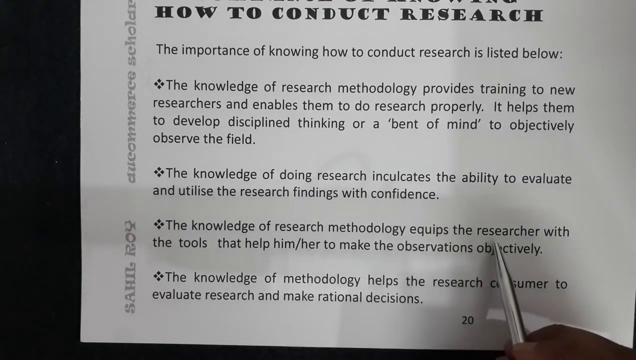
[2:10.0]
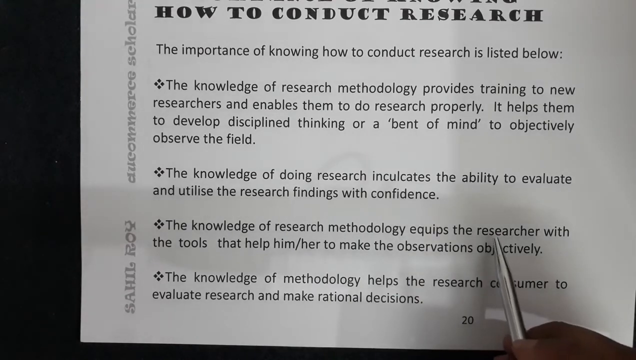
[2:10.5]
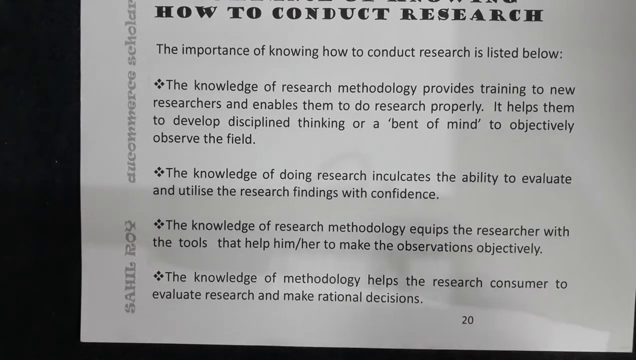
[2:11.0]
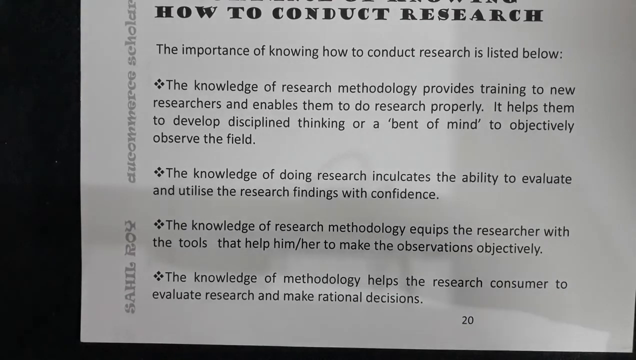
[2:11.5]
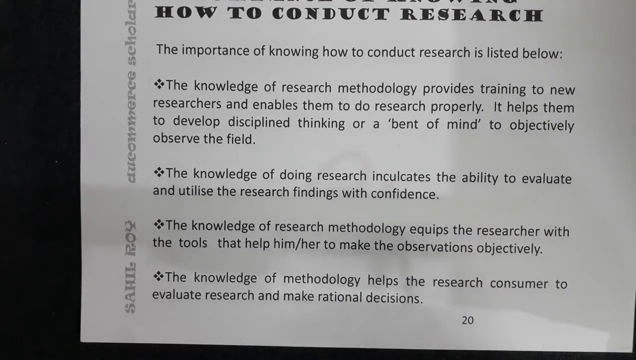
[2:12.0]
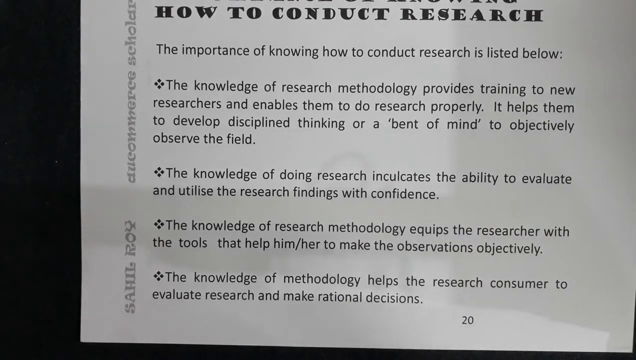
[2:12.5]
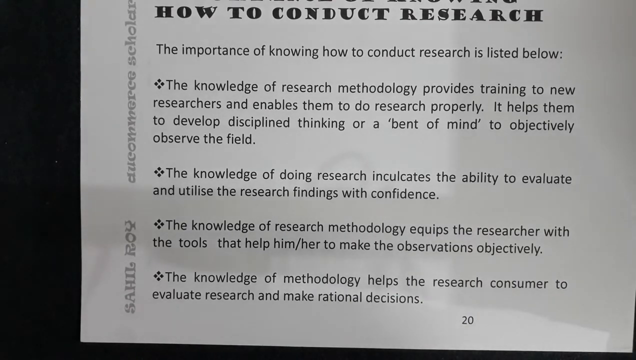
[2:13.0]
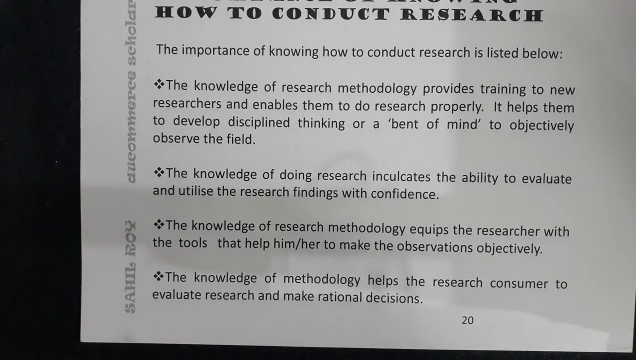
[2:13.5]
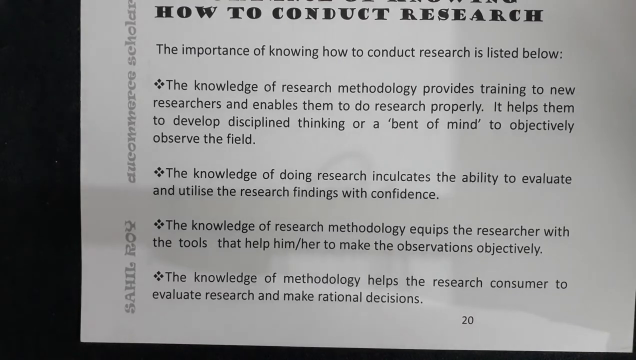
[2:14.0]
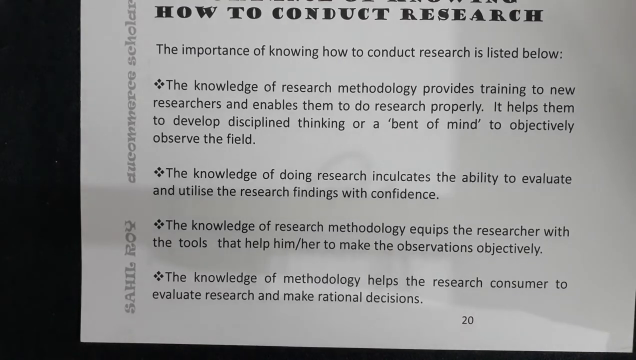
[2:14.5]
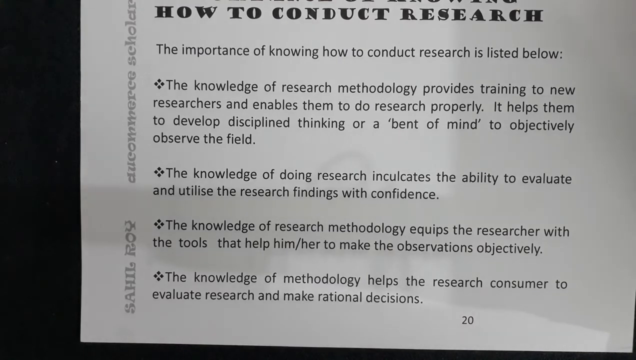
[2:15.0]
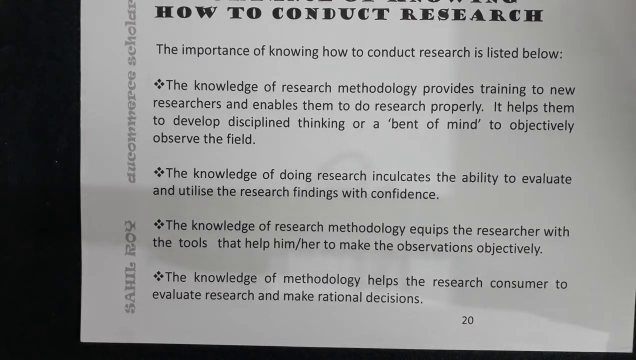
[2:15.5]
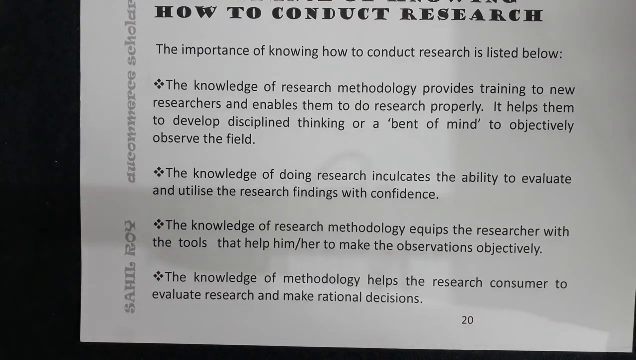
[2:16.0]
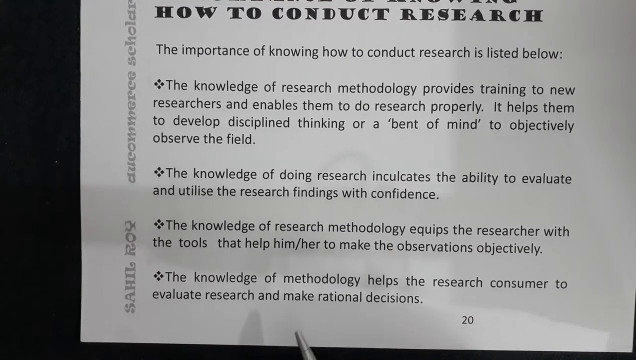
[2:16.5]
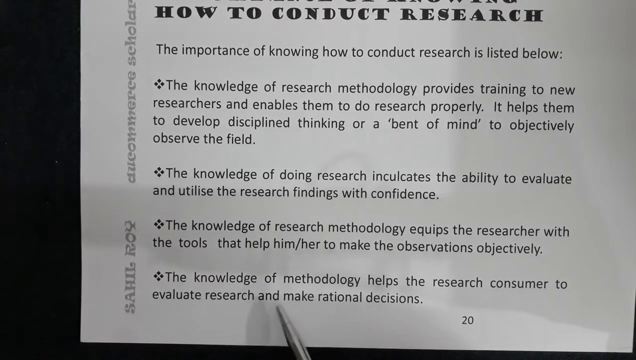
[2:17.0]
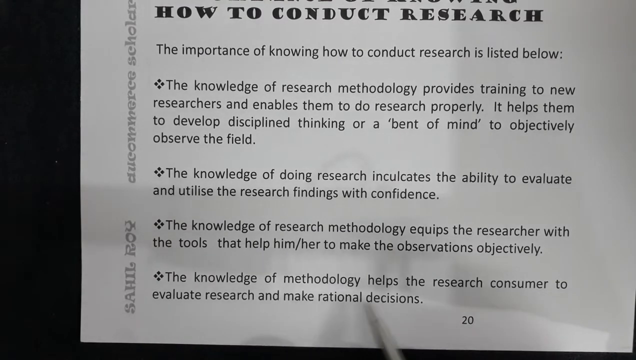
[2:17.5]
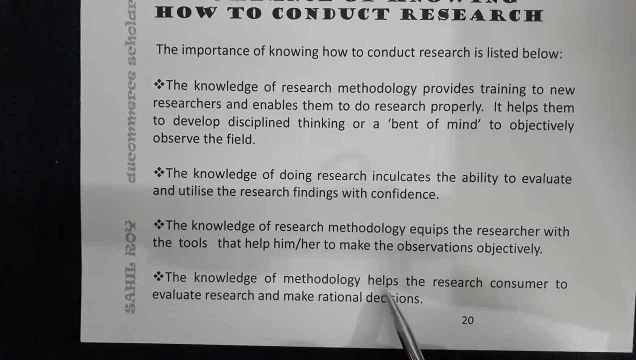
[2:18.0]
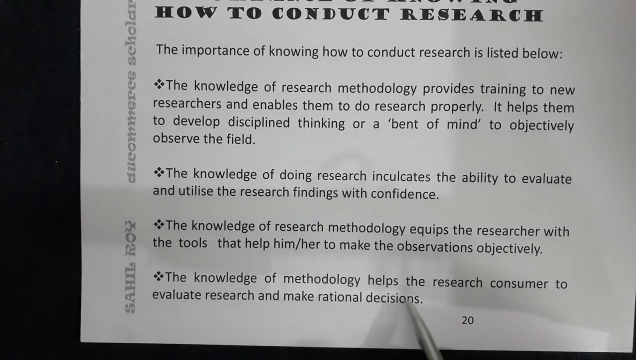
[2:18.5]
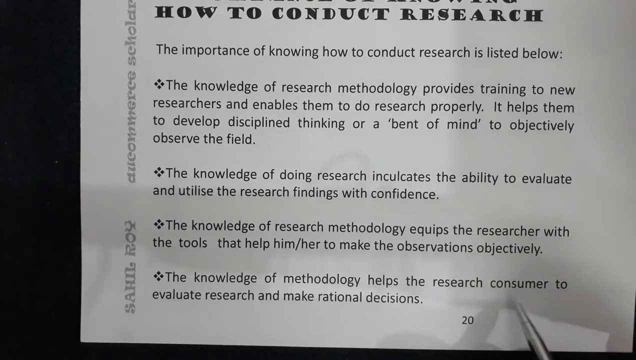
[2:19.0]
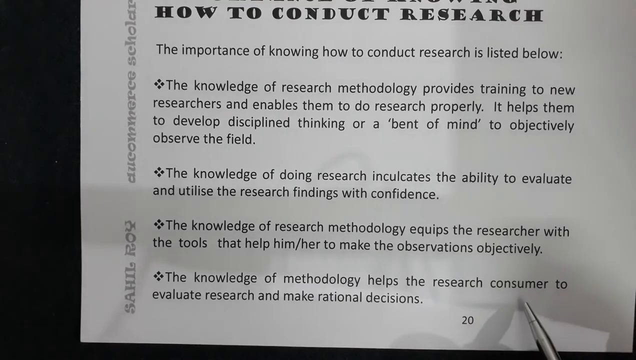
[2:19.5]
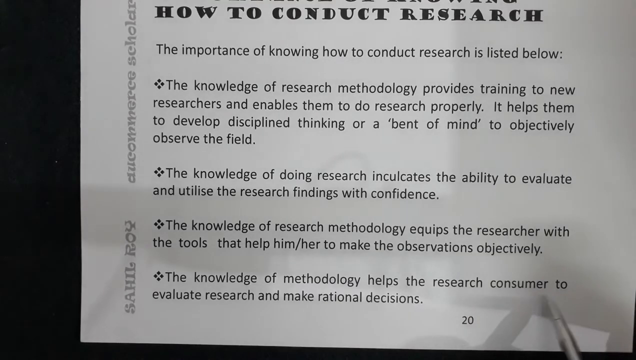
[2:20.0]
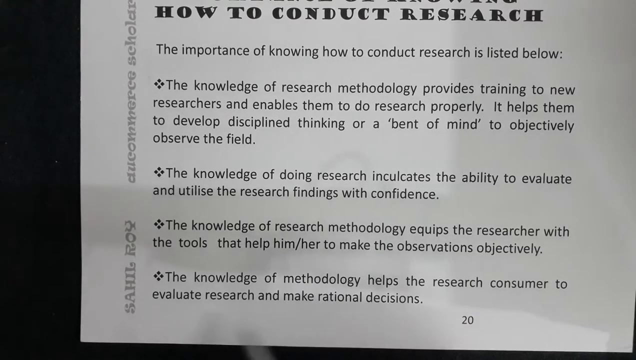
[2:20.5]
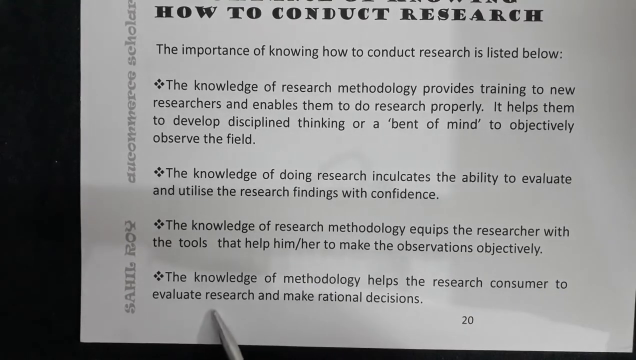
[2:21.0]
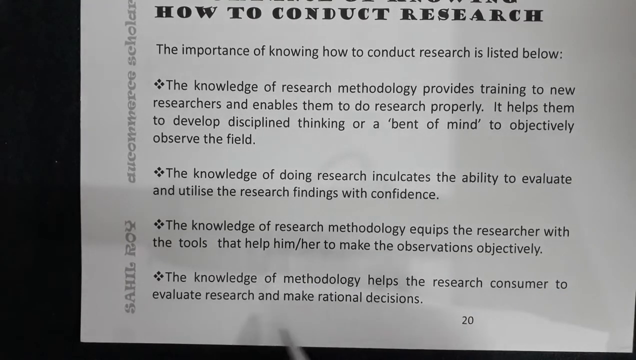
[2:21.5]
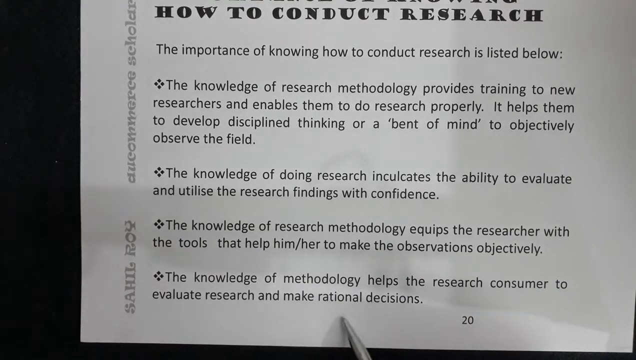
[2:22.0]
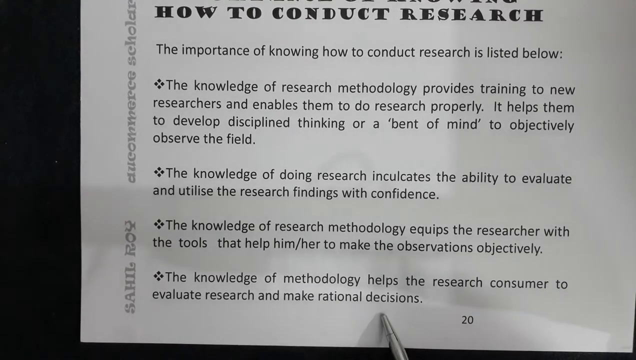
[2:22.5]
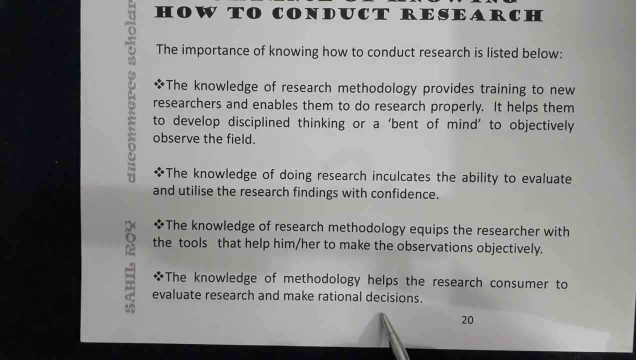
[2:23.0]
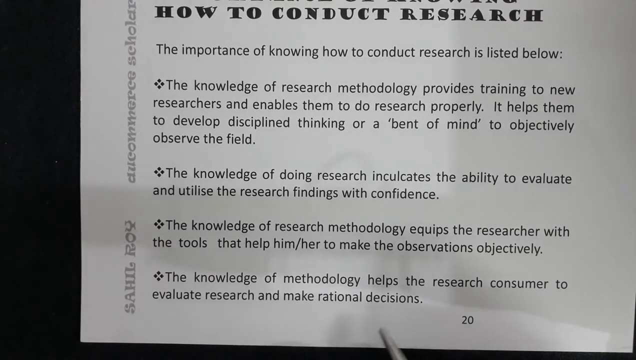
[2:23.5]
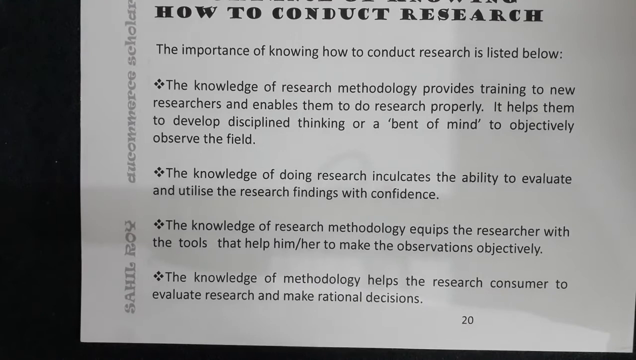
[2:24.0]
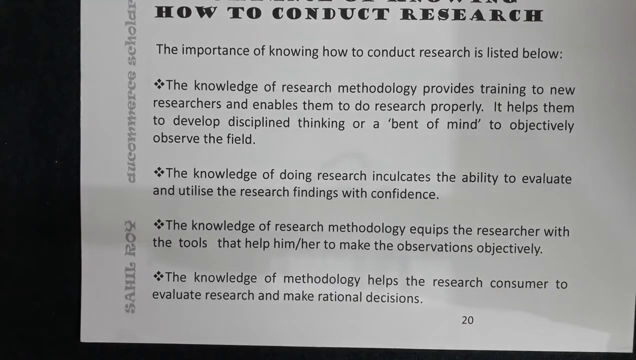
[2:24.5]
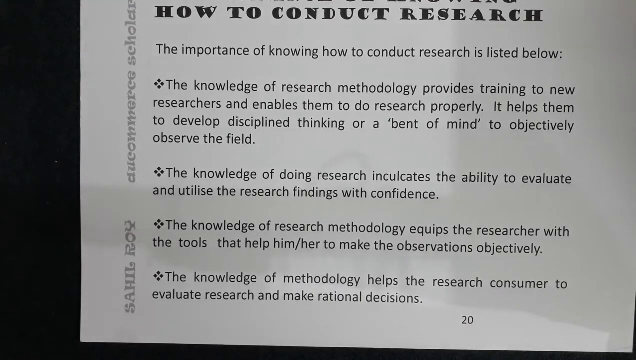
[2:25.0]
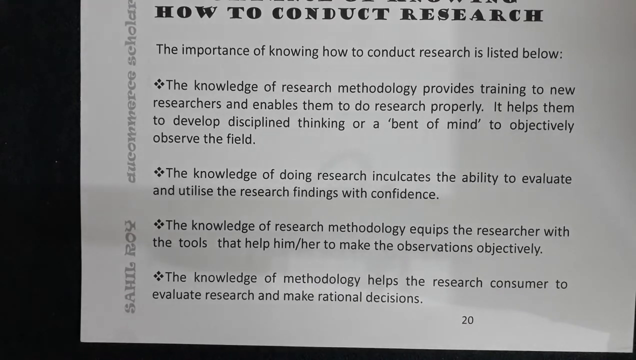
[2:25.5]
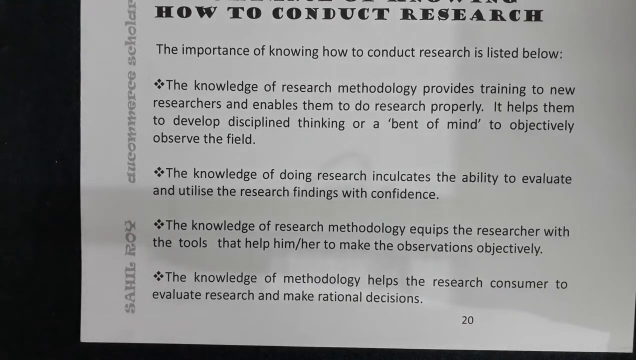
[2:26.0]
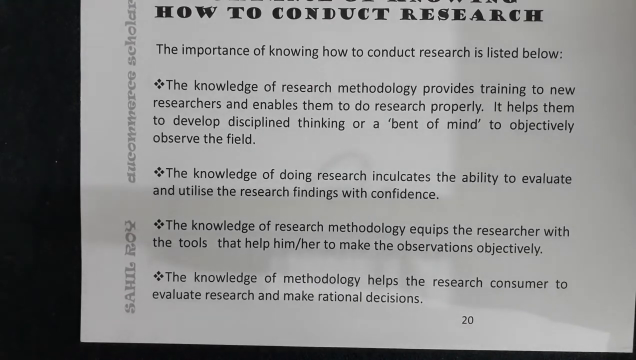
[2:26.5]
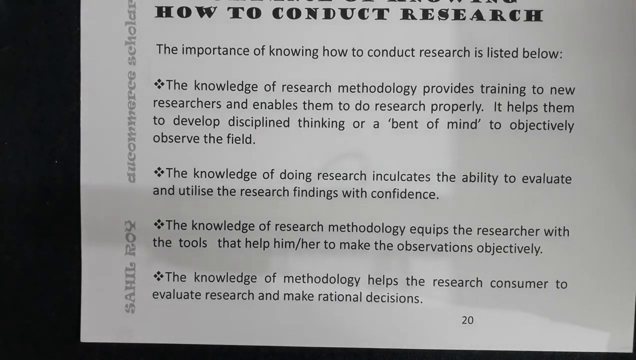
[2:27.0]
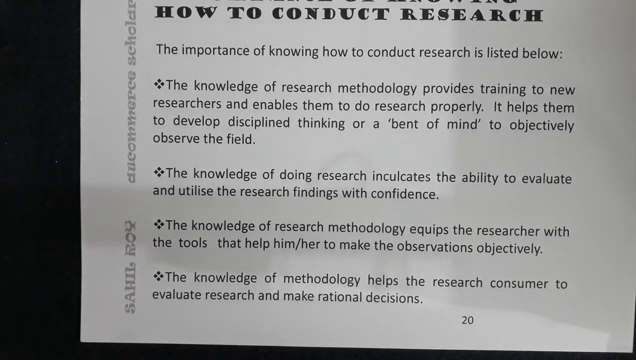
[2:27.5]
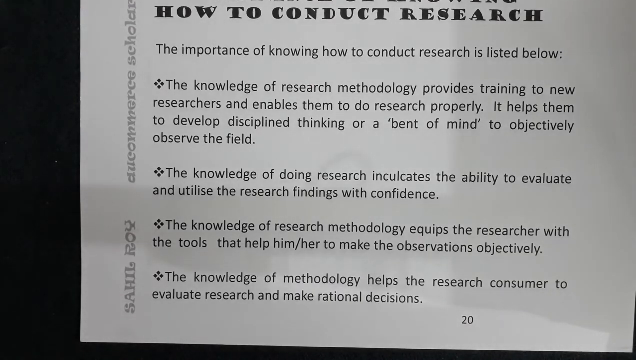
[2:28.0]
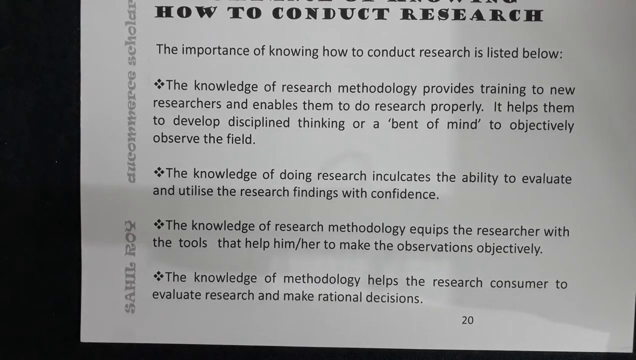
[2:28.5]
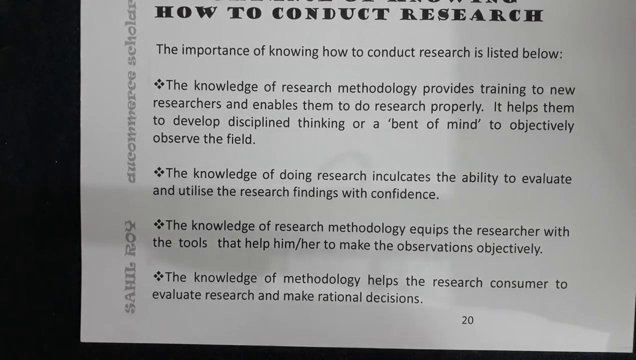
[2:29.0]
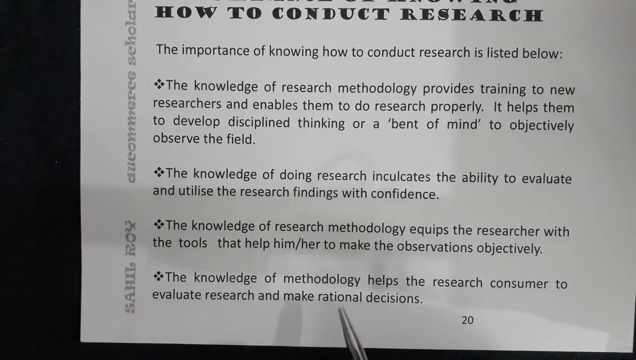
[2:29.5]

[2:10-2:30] A white sheet of printer paper has bold text at the top that says "the importance of knowing how to conduct research," and below it "the importance of knowing how to conduct research is listed below," followed by "The knowledge of research methodology provides training to new researchers and enables them to do research properly." Shadows move above the paper, and the person puts the pen to the bottom point and goes along the sentence as if reading it.